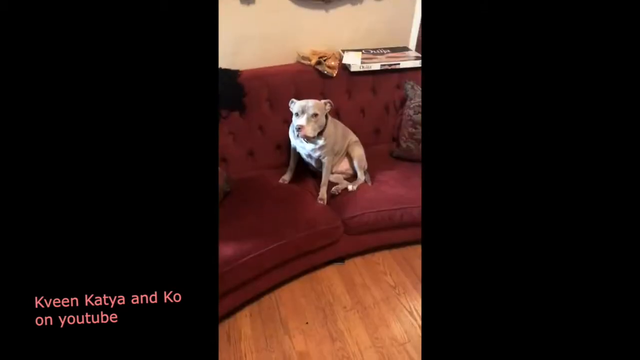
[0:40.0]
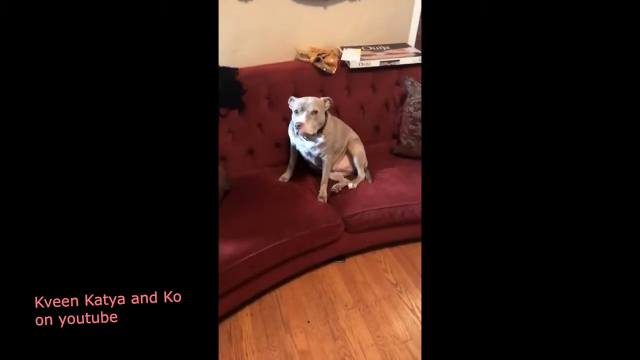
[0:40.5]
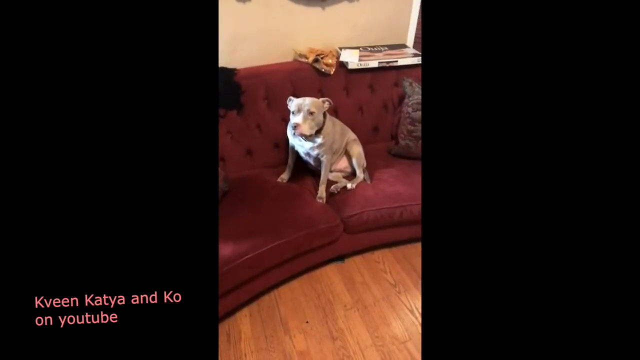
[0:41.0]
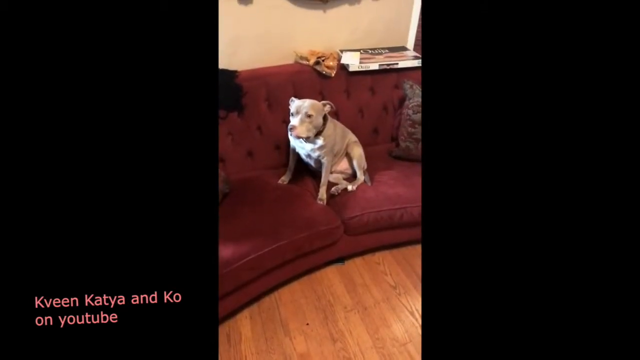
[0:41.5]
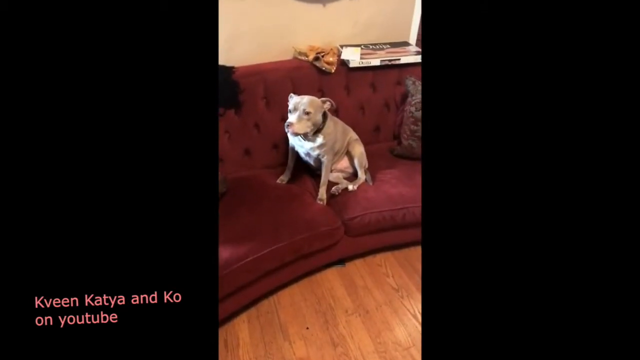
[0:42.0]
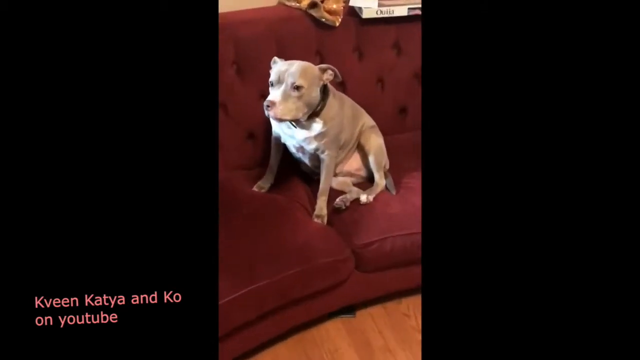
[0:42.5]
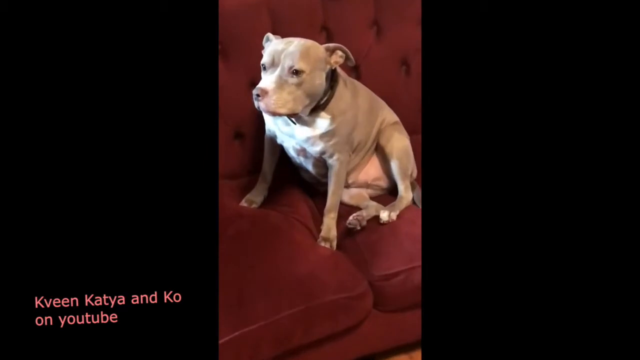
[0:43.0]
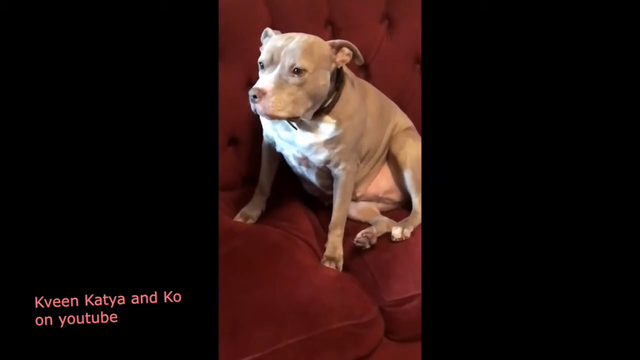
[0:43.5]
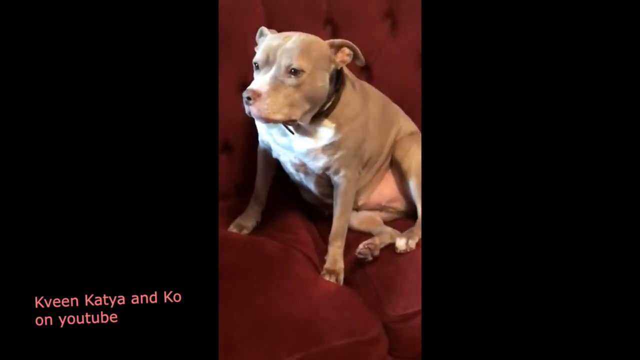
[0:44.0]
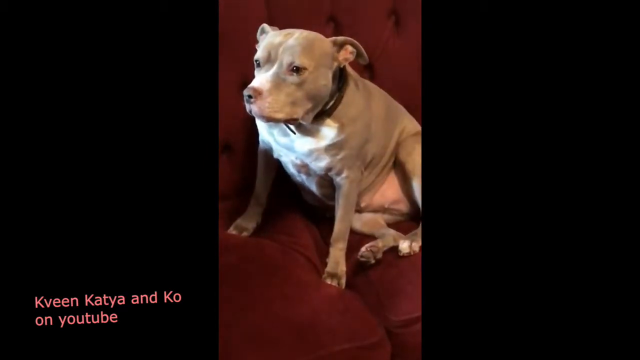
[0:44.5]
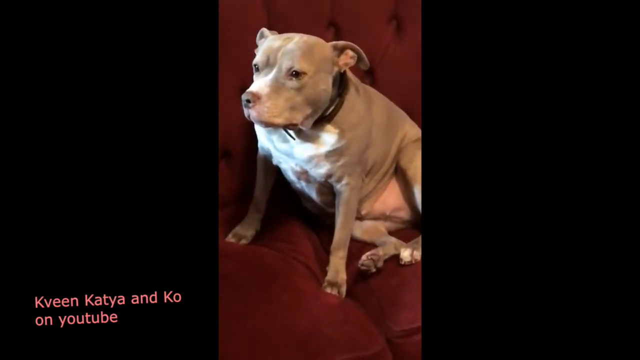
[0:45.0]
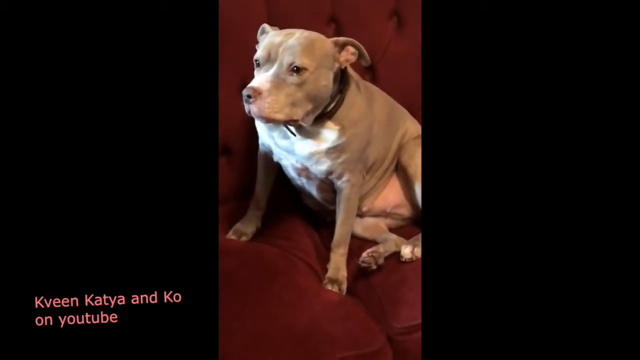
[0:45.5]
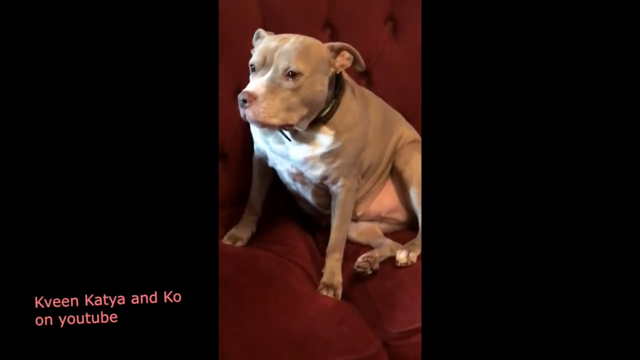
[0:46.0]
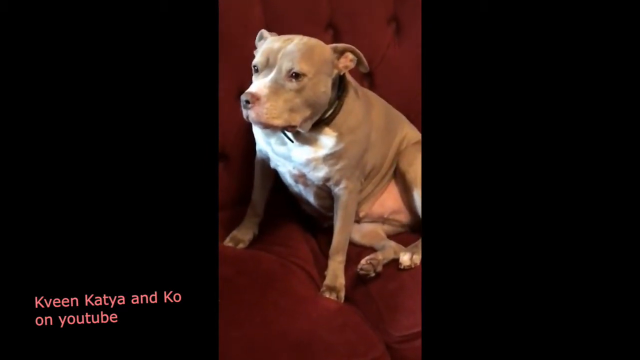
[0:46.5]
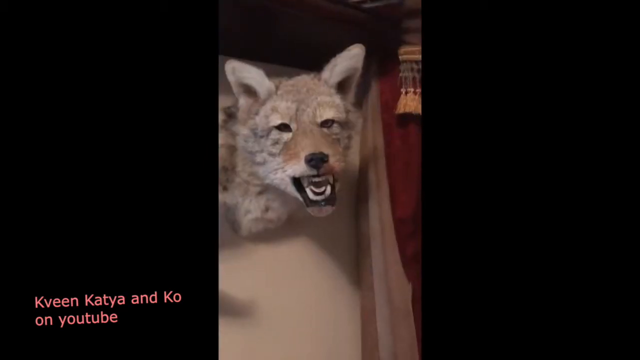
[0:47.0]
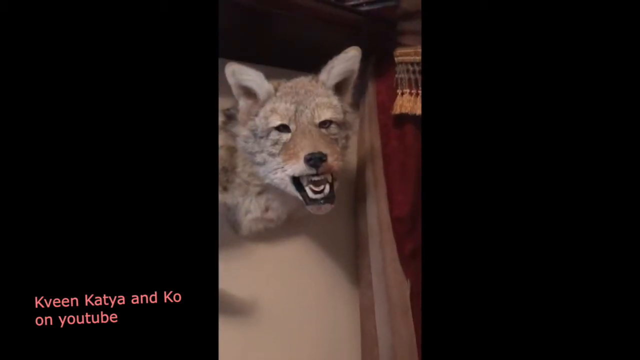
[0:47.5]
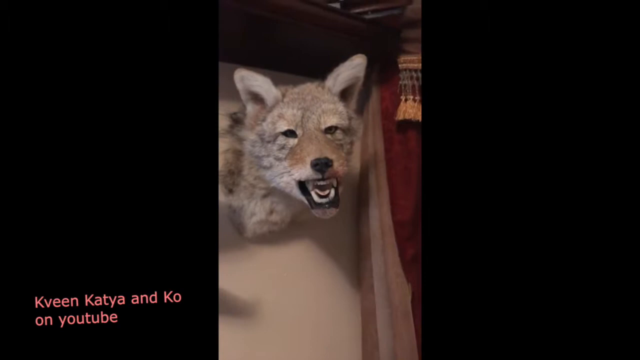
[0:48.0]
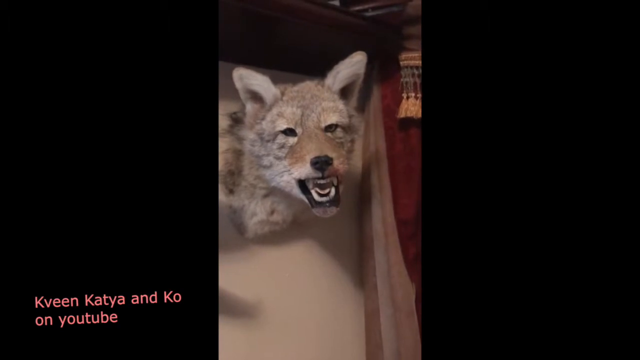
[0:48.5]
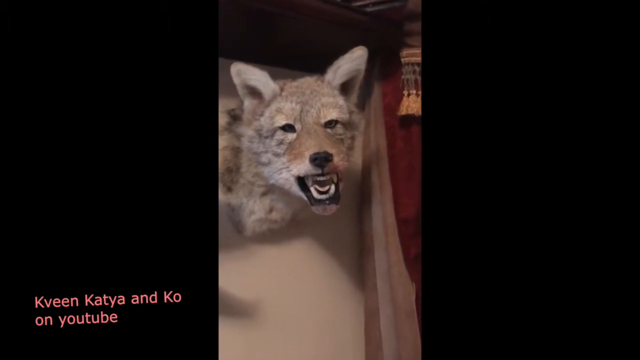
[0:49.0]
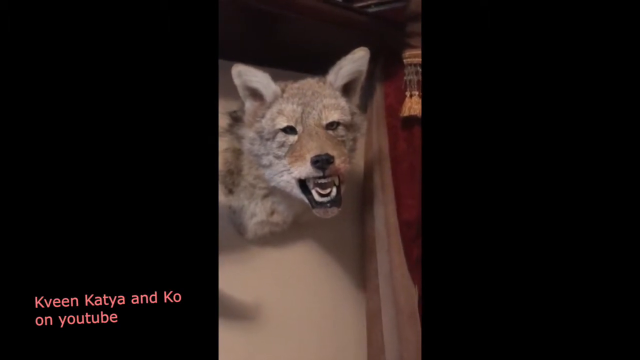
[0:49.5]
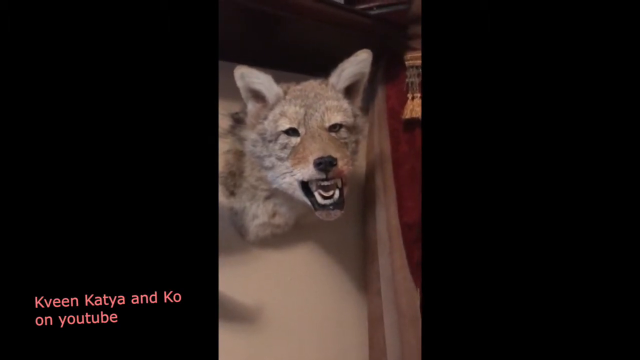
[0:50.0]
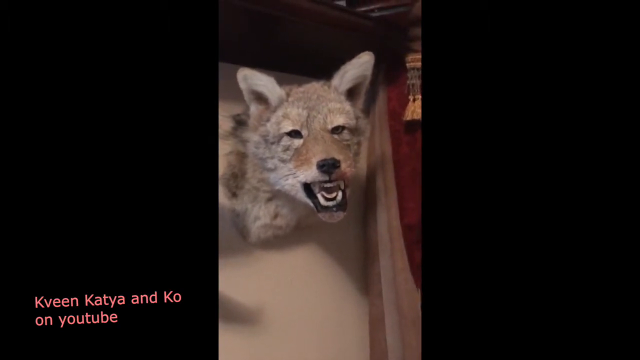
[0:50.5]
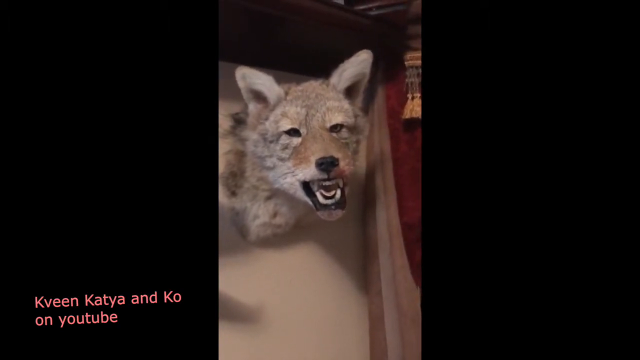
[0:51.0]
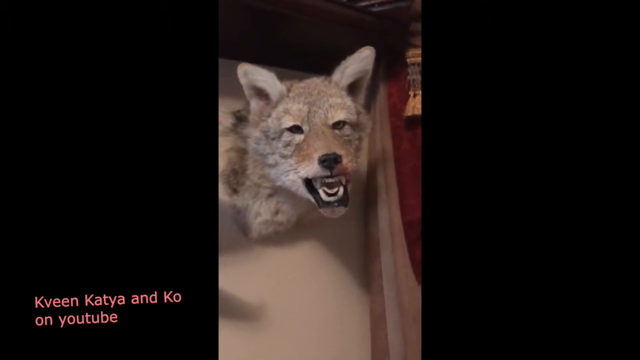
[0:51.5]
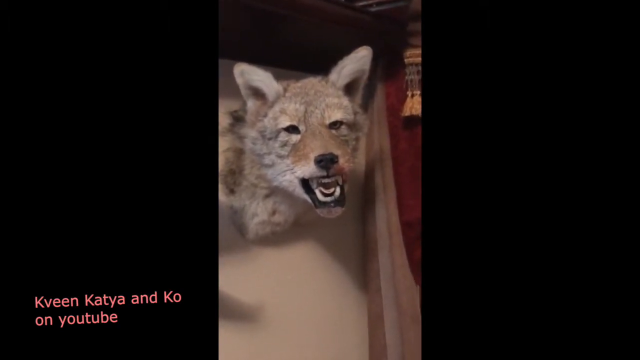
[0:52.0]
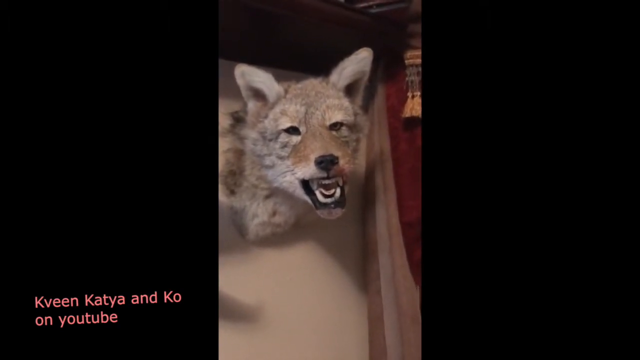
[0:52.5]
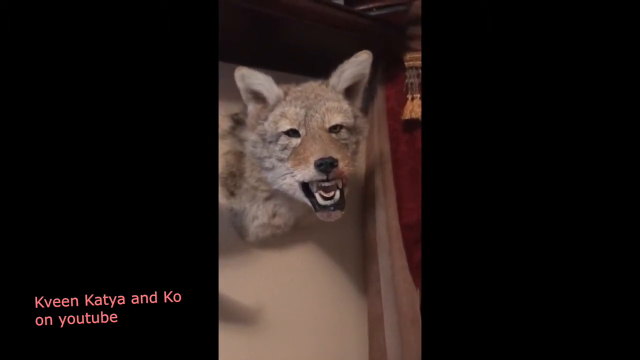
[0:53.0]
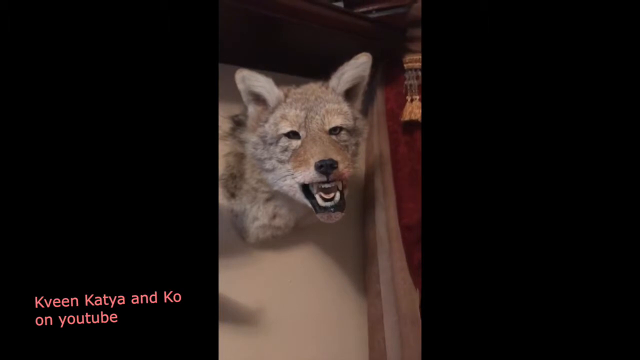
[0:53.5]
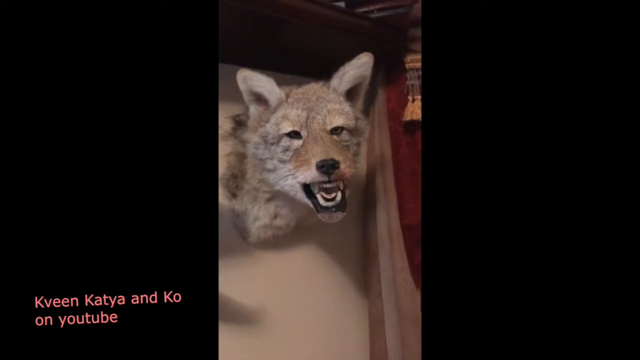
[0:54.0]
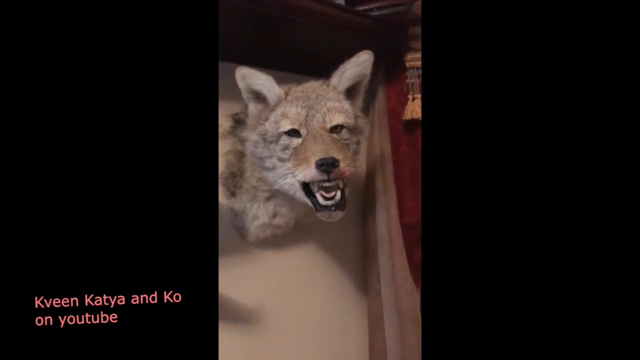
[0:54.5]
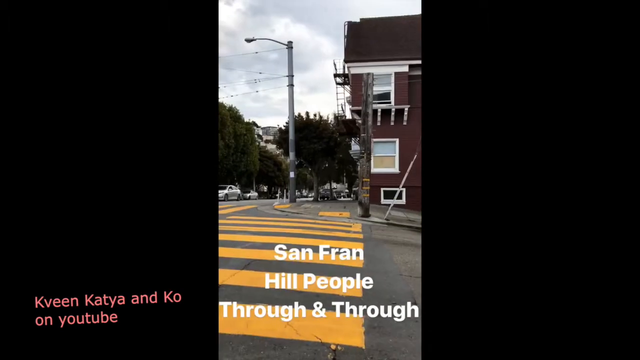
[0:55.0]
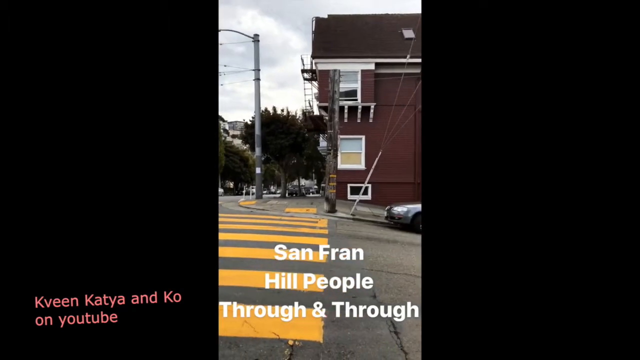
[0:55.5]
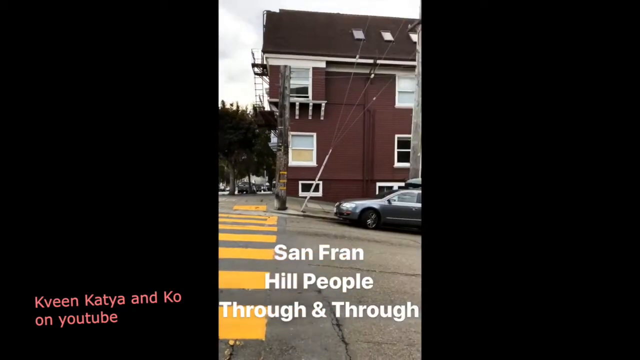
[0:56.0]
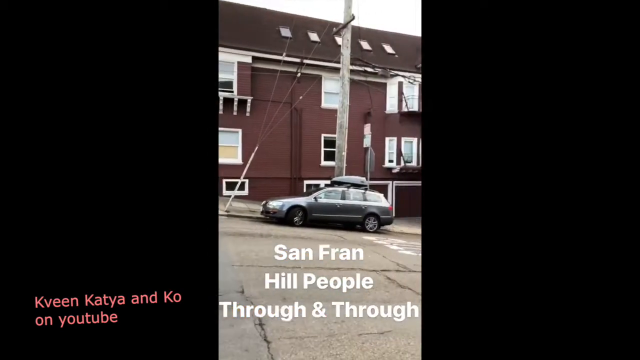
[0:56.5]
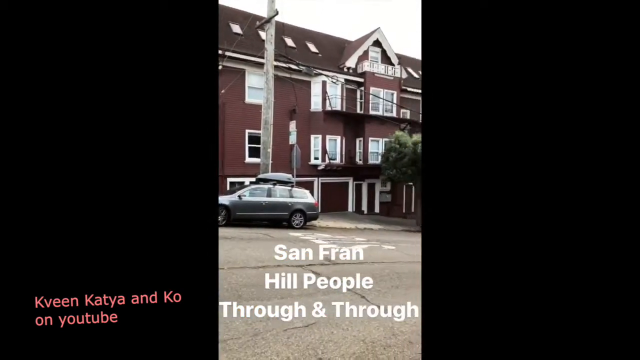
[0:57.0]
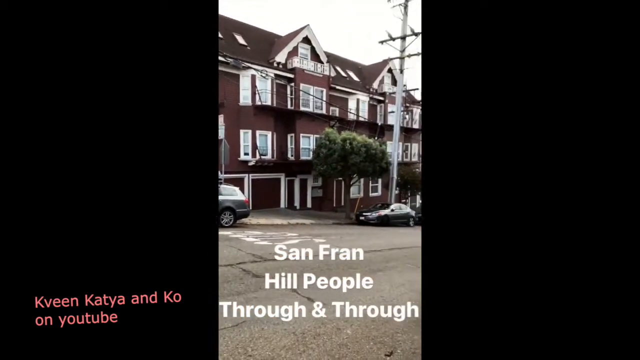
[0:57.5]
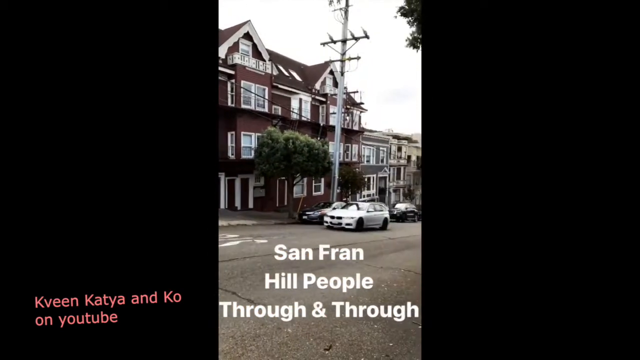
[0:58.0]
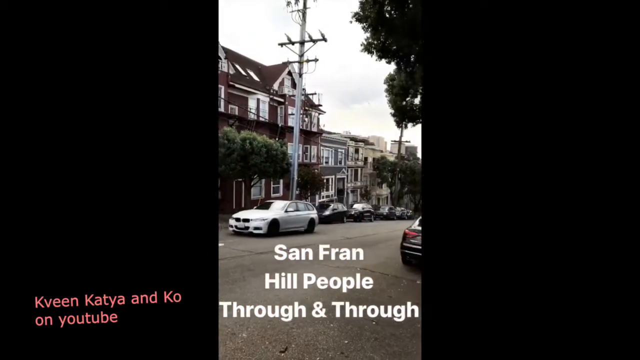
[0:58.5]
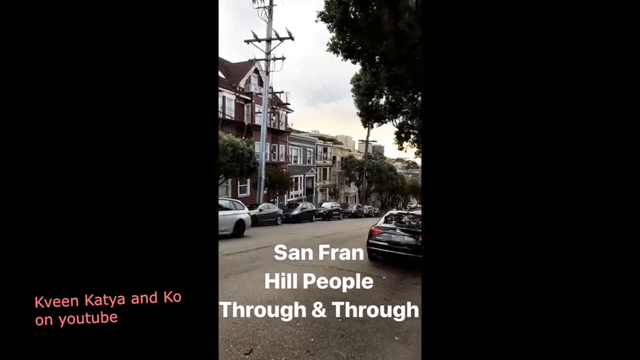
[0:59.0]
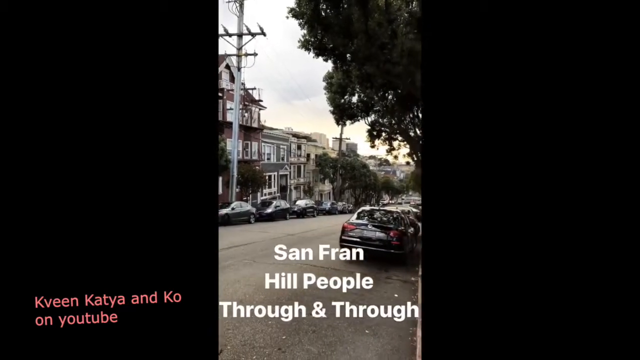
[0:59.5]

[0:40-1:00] A dog is sitting on a burgundy couch, kind of sitting almost like a human would, with its butt down and its arms on the side. There are a couple of pillows on the couch, a beige wall in the background, a wooden floor, and white trim around the windows. The camera zooms in on what looks like a taxidermied wolf with its mouth open, which looks kind of scary. The camera then pans around outside, where text says "San Fran, hill people through and through". A car drives by, and cars are parked on both sides of the road. In the lower right or left-hand corner, text reads "Kveen Catya Co.", with the name spelled K-V-E-E-N and K-A-T-Y-A, maybe the people who made these videos.